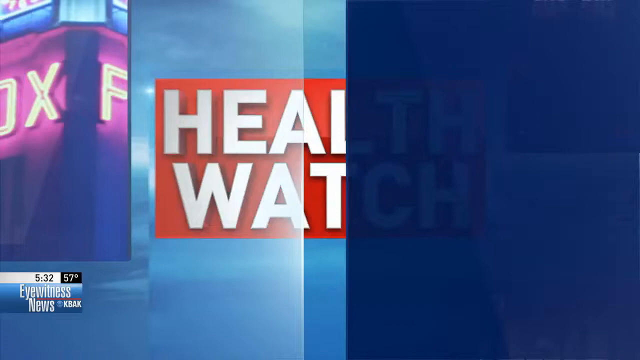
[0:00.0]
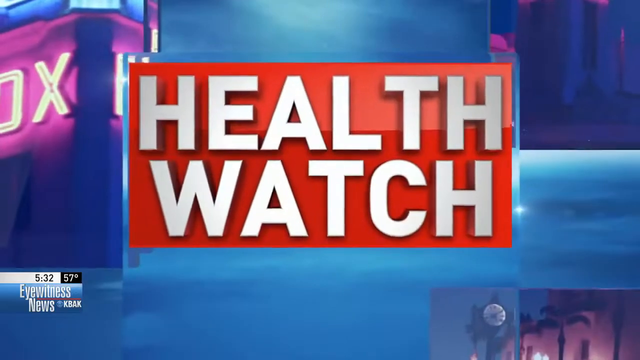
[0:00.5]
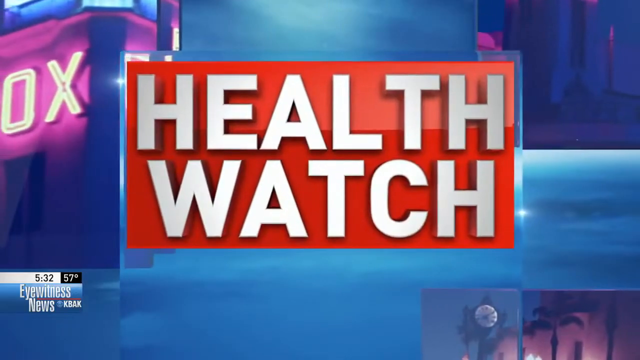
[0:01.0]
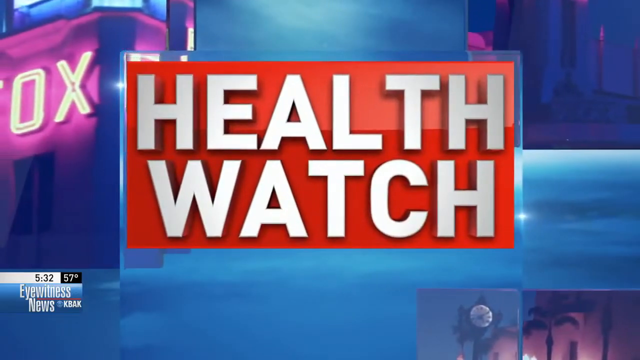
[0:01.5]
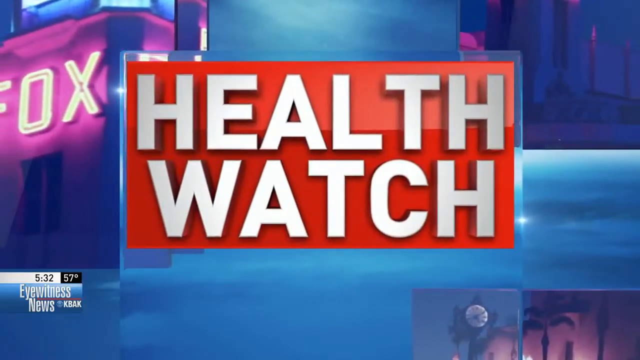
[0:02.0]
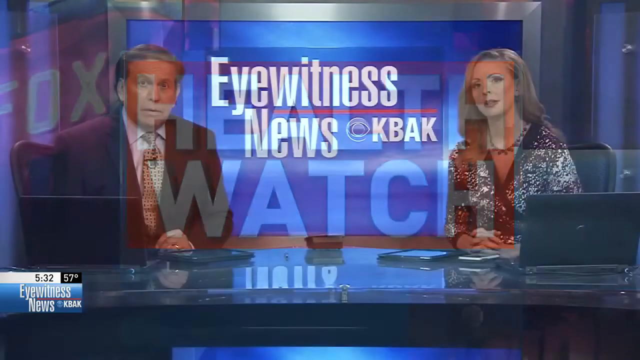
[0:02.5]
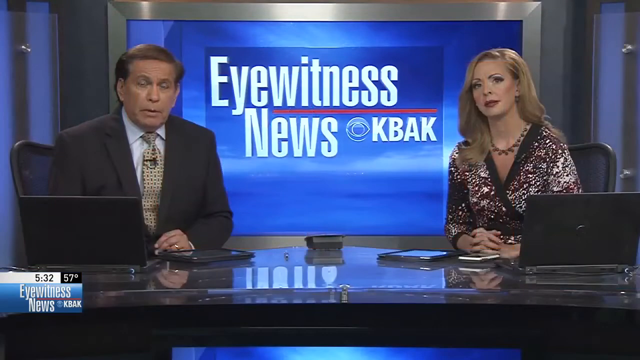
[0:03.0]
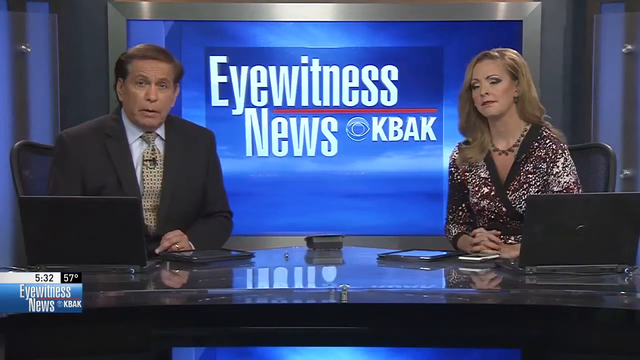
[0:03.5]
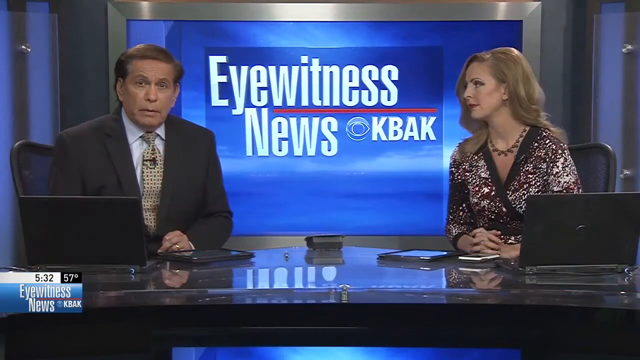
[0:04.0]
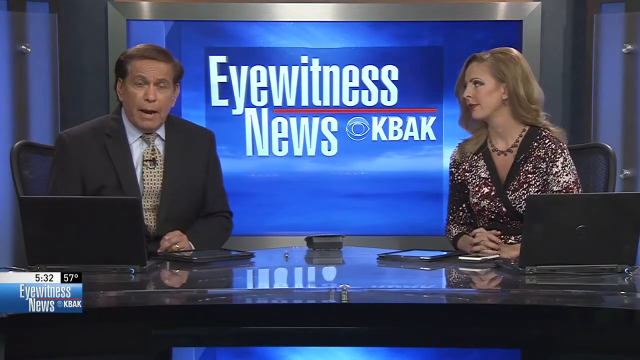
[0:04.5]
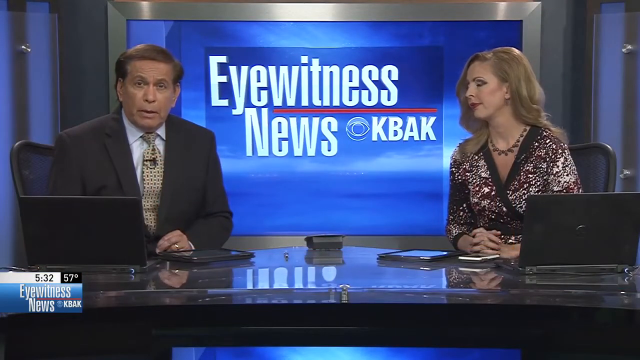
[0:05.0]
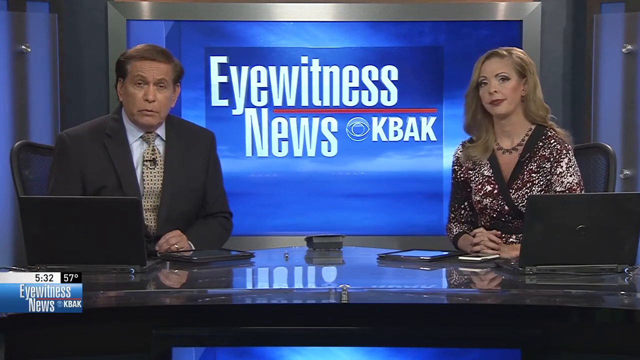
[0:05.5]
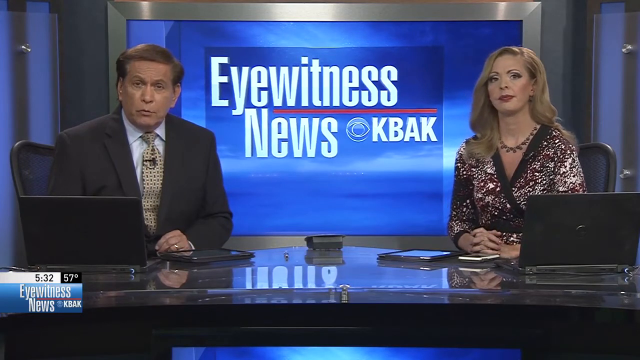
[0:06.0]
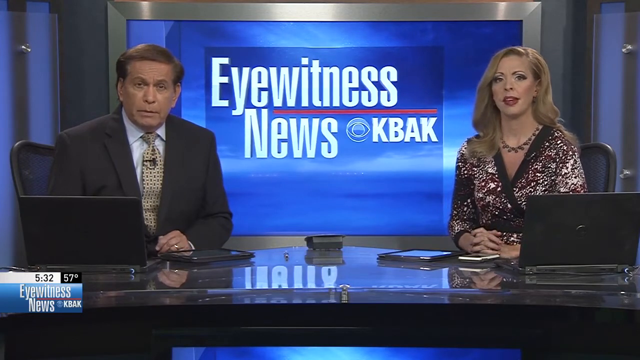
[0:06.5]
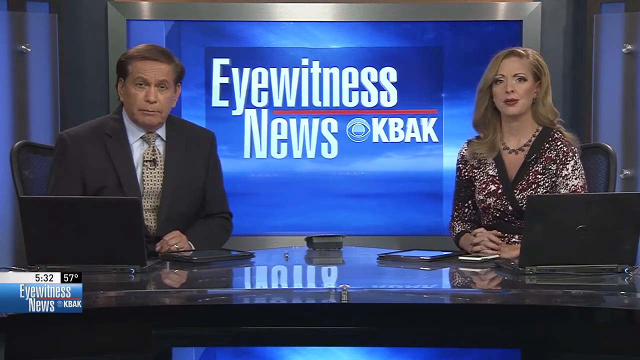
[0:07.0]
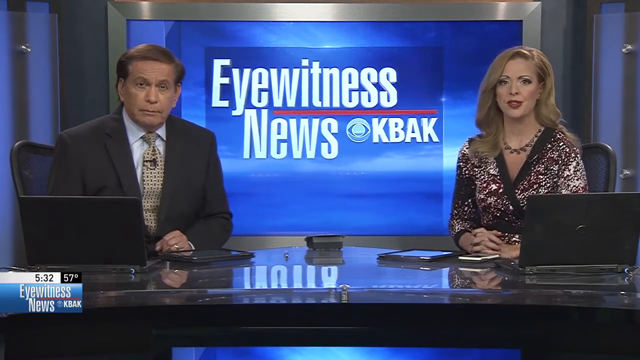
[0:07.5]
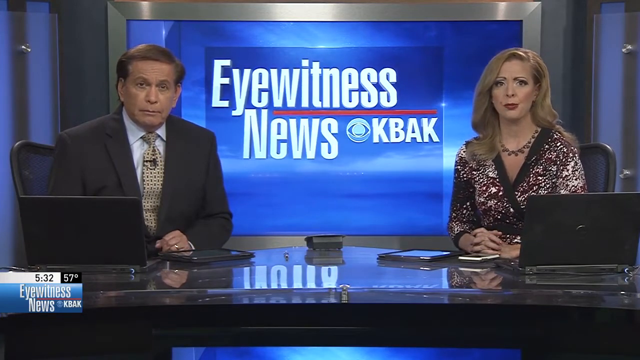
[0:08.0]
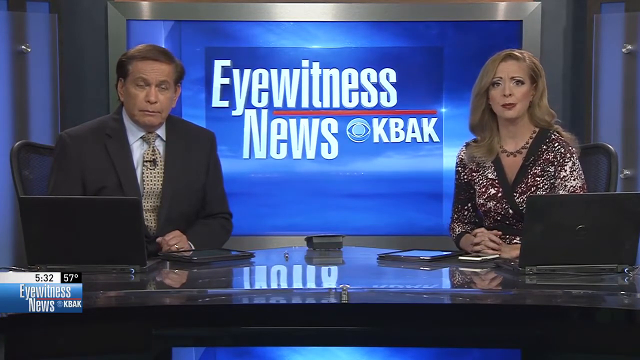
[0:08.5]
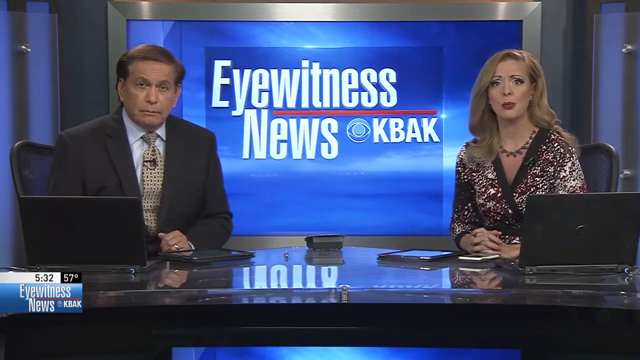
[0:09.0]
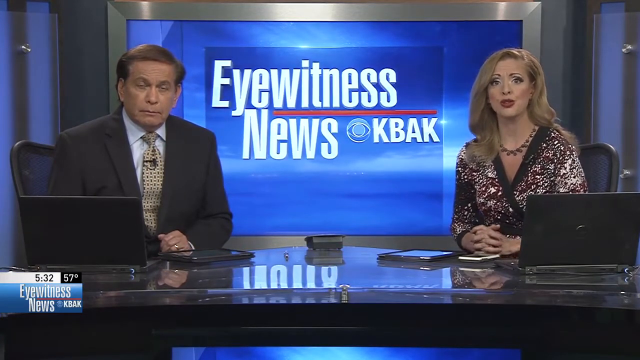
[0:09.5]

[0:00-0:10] A word graphic opens the video: a red box with the words "health watch" moves toward the viewer, growing a little larger, in front of a blue backdrop, while graphics move toward the center of the screen. Two news people sit behind a desk, both with their hands on it; the woman on the right has her hands folded, and the man on the left has one hand on the desk. Behind them the text reads "eyewitness news, KBAK". The woman turns her head toward the man on the left, who looks directly at the camera and speaks, his mouth moving a little. Then the woman speaks, looking directly at the camera, and briefly lifts her hands off the desk. Both remain seated. Behind them is a large TV screen, and the shiny desk in front of them reflects it. Each has a black laptop open and a tablet in front of them.